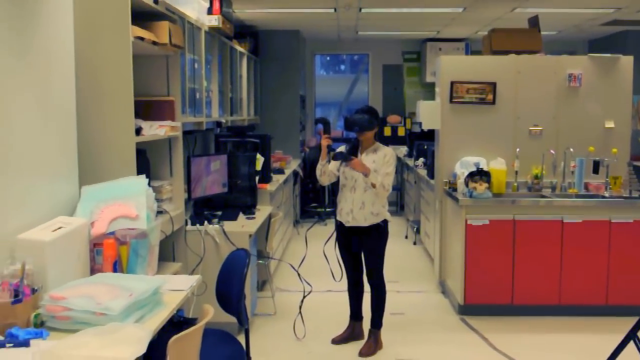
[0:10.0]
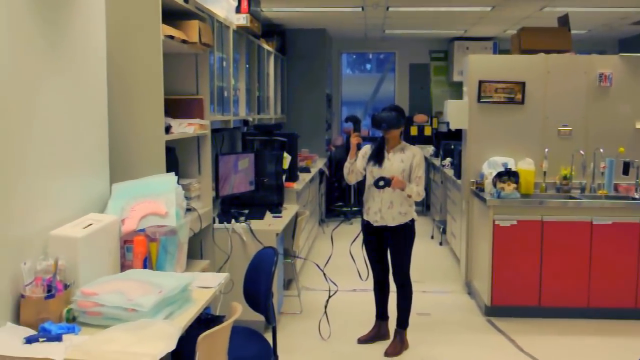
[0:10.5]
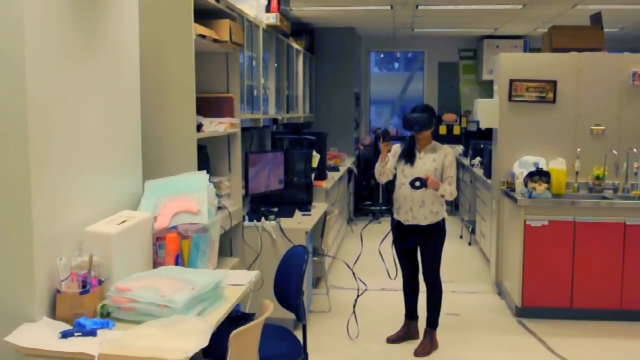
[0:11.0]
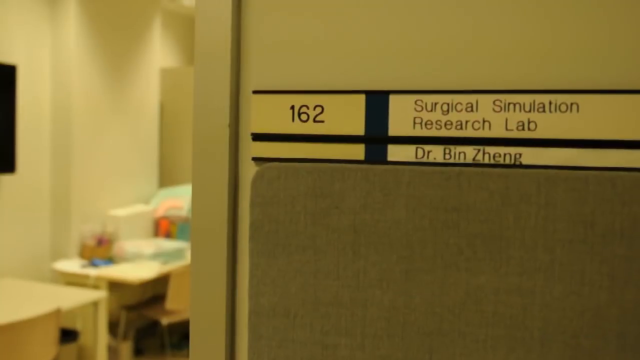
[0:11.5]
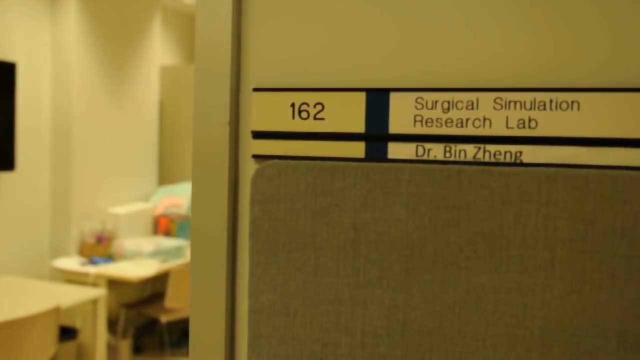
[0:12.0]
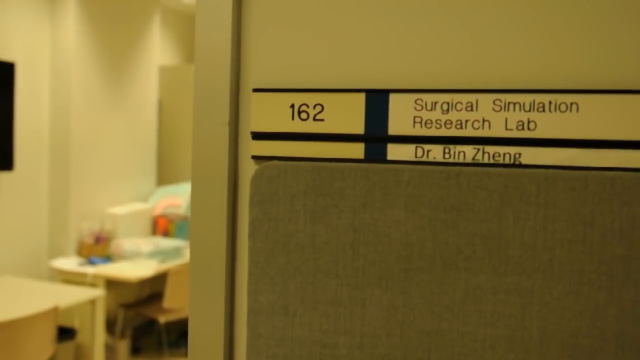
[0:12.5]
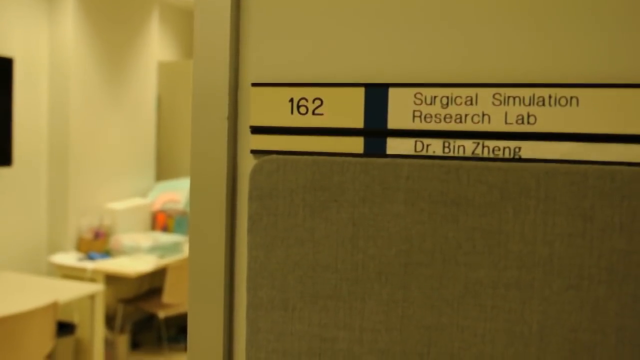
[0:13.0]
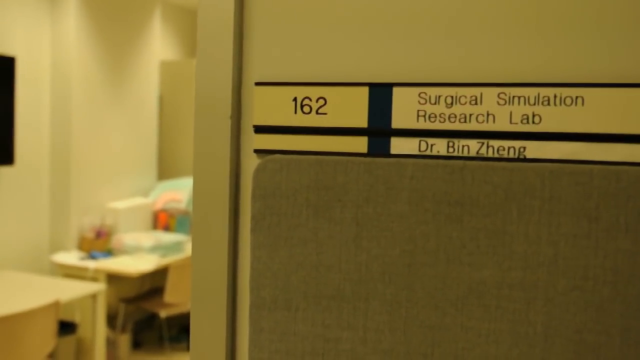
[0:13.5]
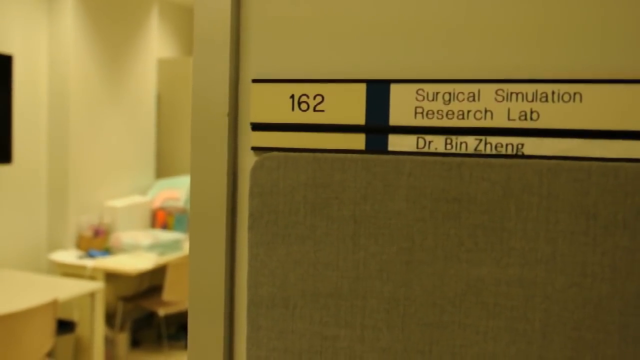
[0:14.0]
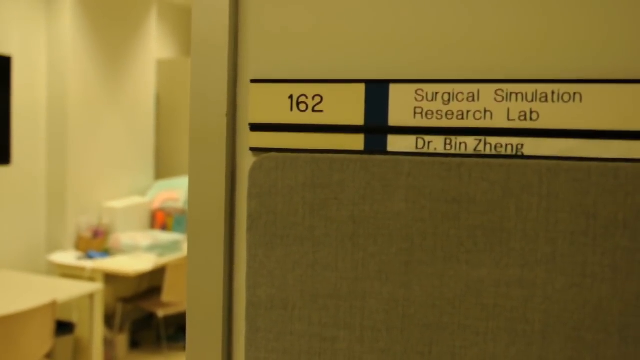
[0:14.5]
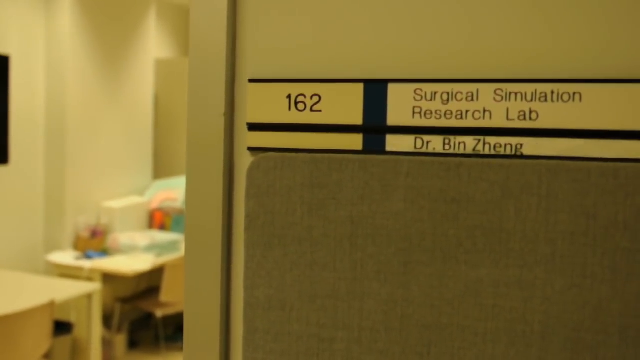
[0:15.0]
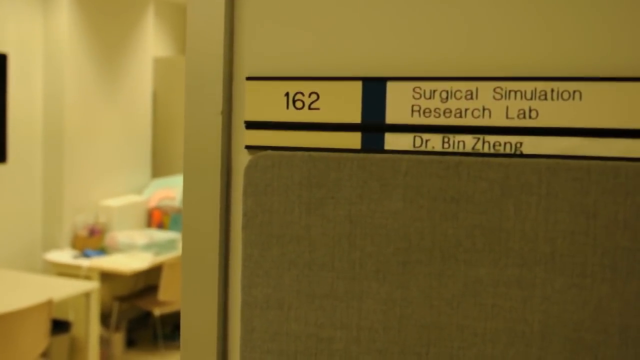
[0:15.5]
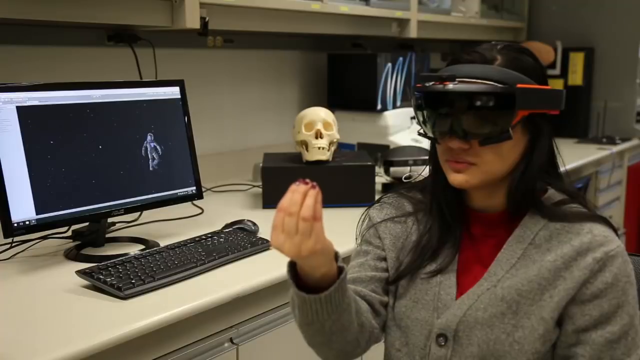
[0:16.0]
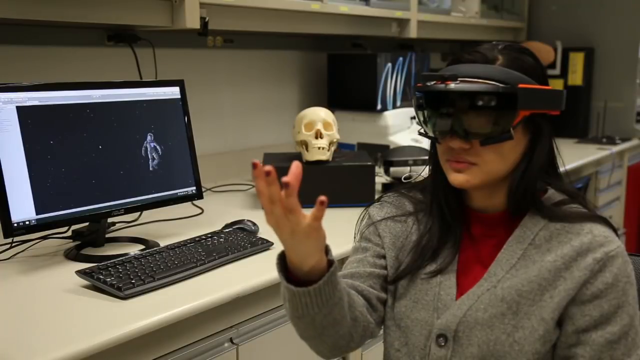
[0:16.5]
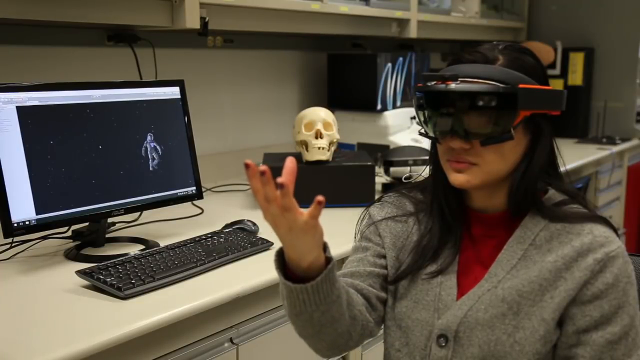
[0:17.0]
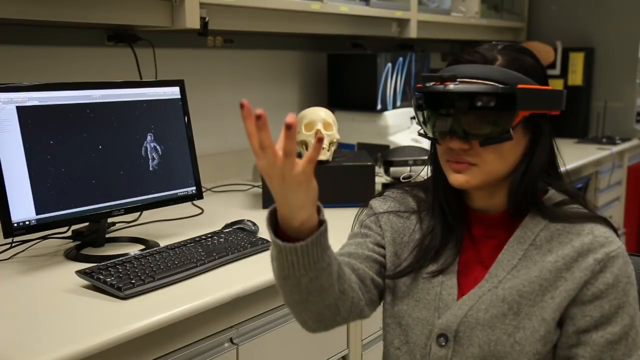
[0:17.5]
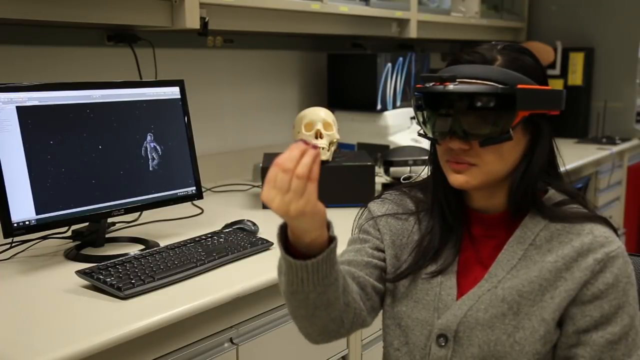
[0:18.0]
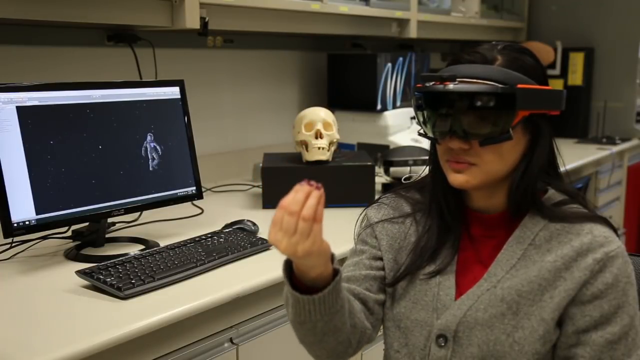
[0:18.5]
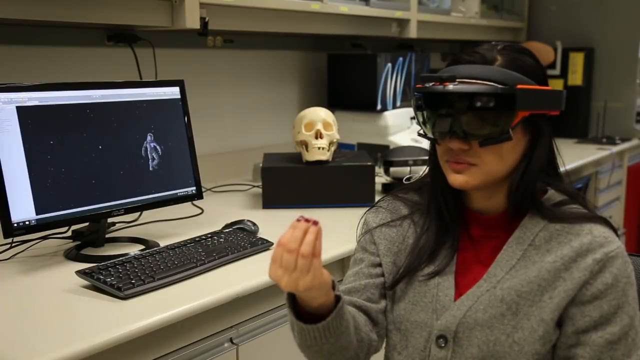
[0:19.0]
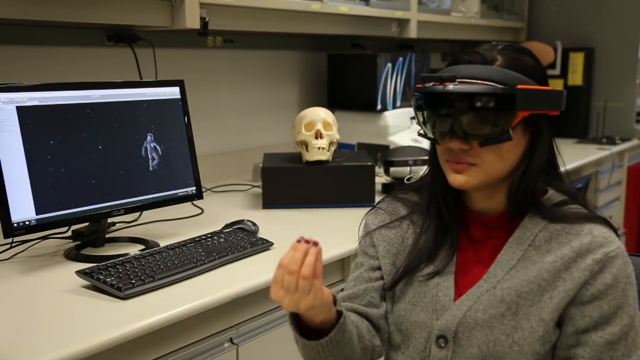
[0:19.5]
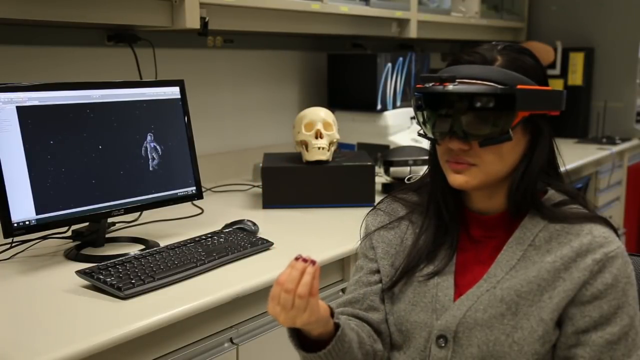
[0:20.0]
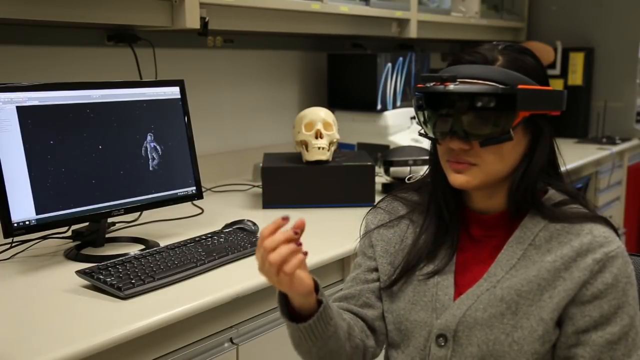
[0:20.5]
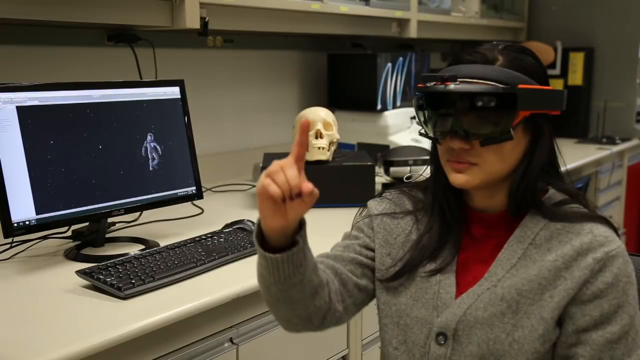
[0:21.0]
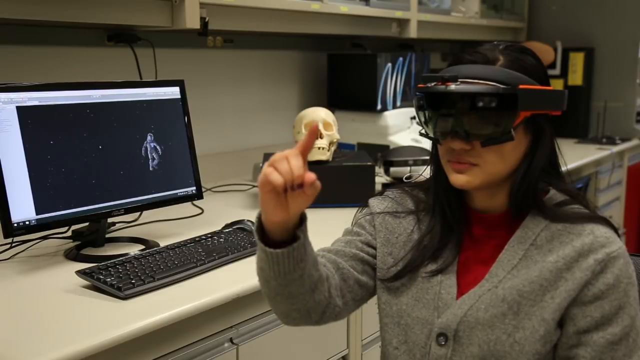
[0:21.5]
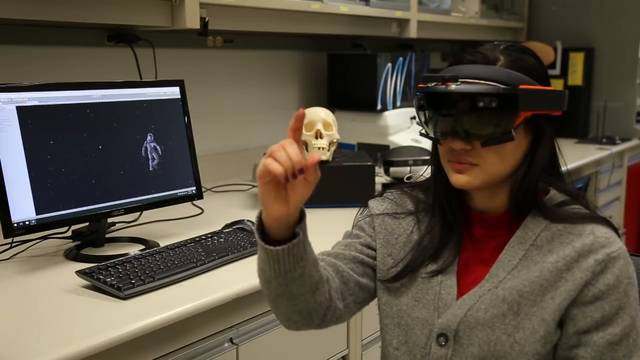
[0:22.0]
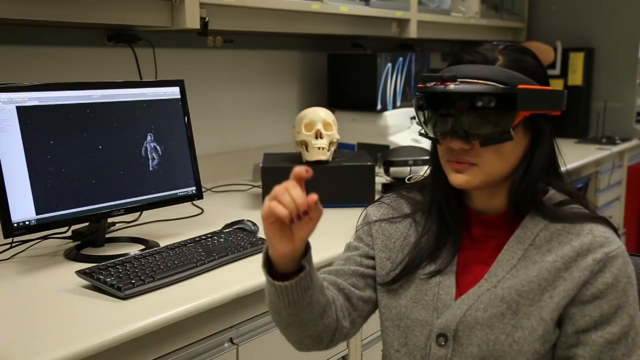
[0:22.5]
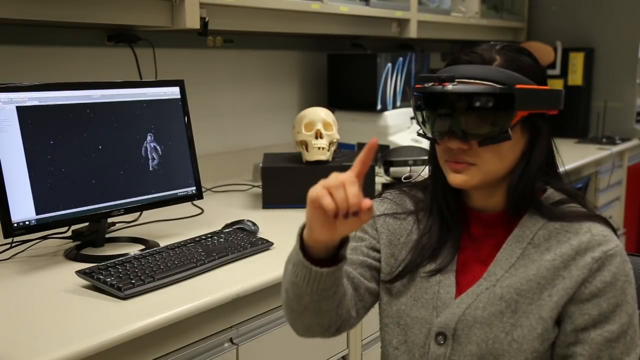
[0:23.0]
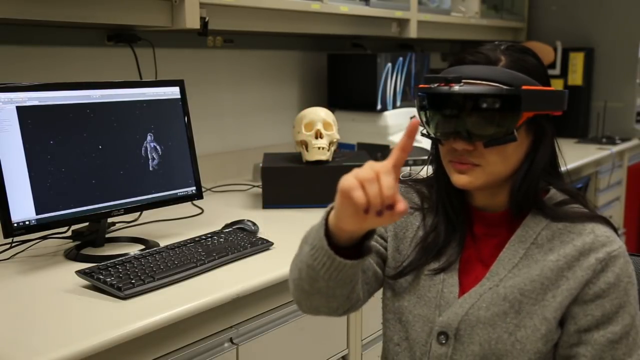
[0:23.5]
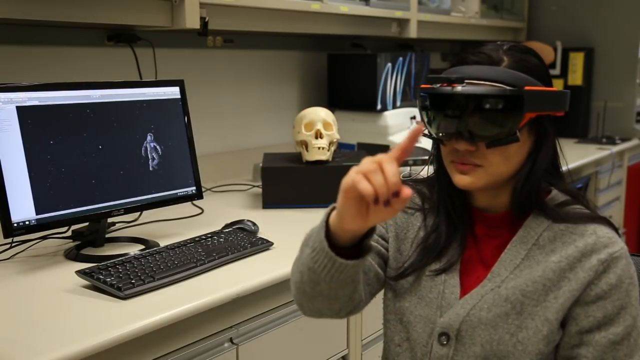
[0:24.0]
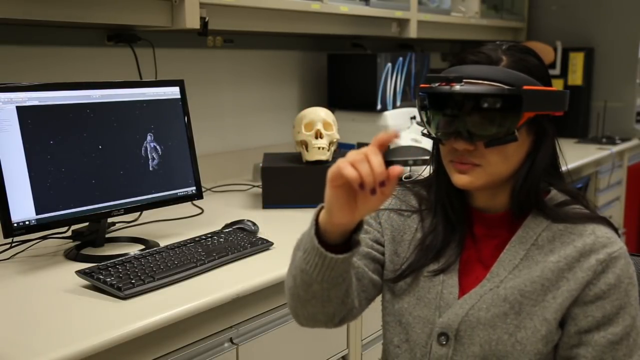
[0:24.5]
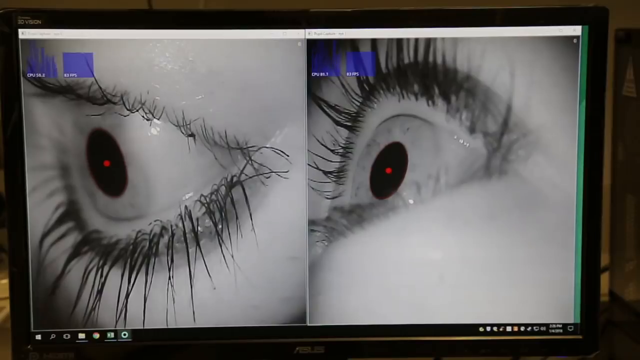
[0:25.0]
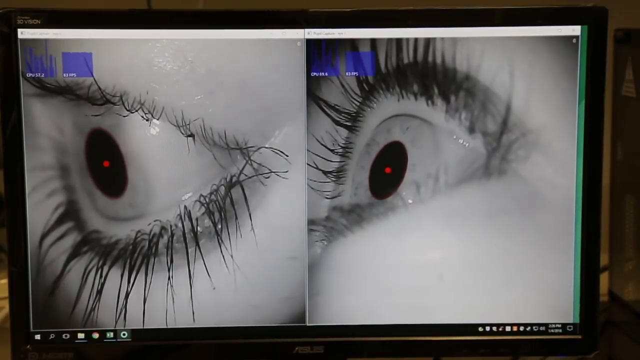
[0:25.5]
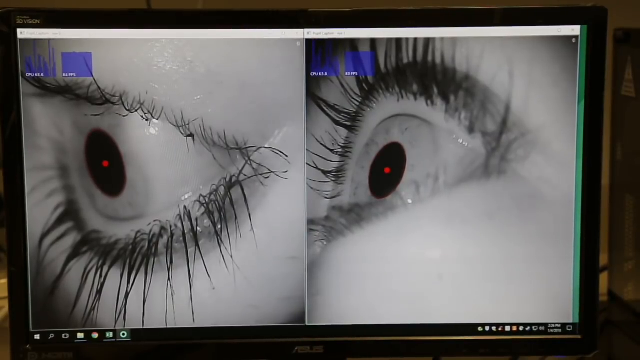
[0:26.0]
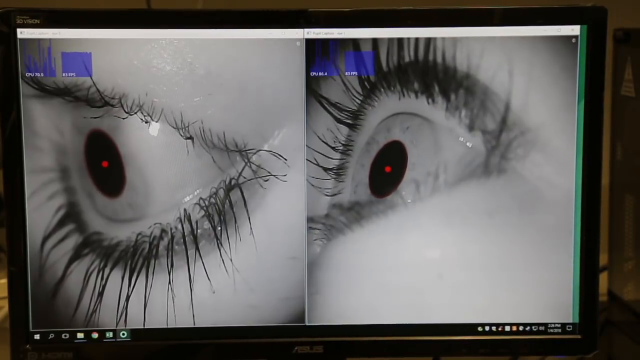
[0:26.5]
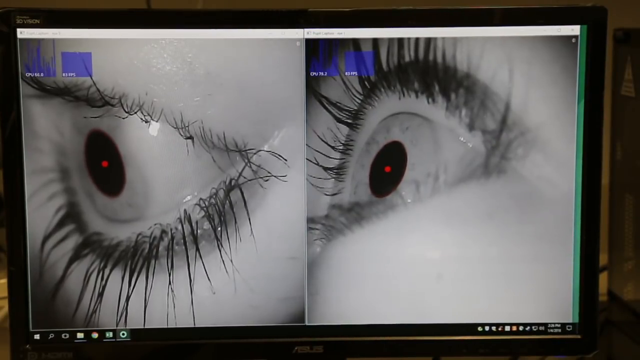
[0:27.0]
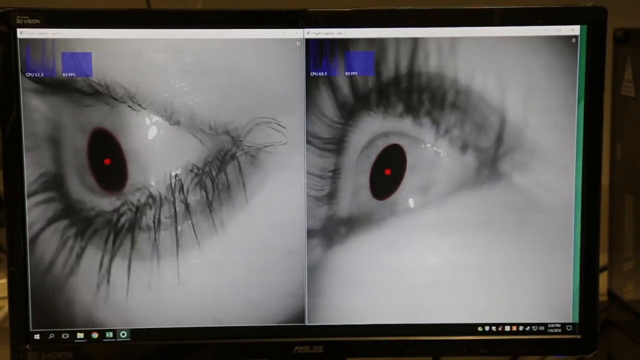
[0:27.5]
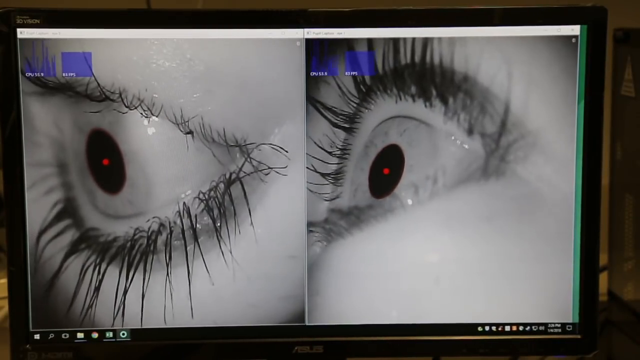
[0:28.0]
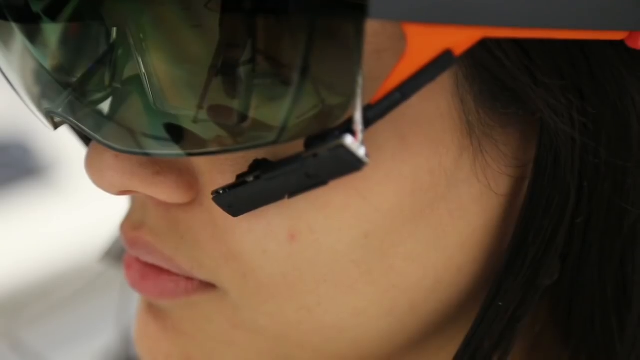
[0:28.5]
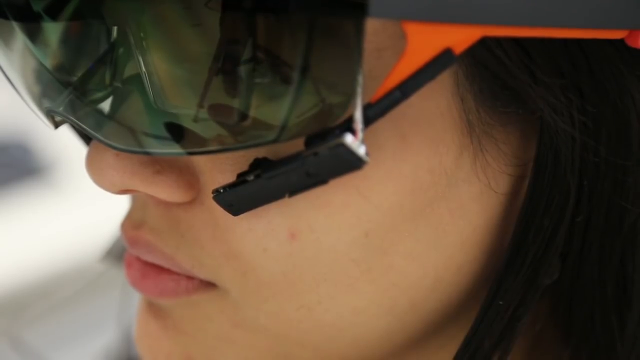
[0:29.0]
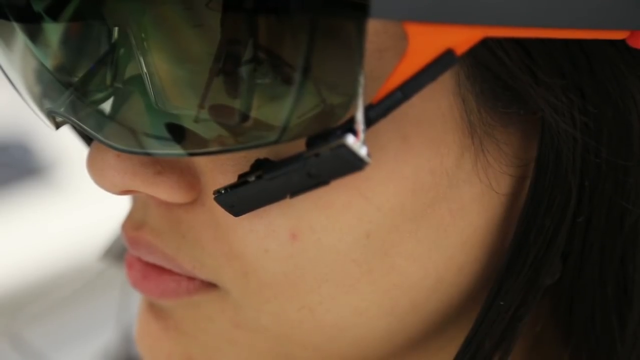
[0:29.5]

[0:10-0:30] A woman who appears to be standing inside a laboratory holds a piece of medical equipment in her hands; she holds the camera up to her face and films the area of the room around her. The scene changes to a plaque on the wall stating the room number, the type of room and the doctor's name: room 162, a surgical simulation research lab, whose doctor is Dr. Bin Zheng. Next, a woman sits at a desk, not facing it but turned to the left, apparently wearing simulation glasses. She holds her right arm out in front of her, bent at the elbow with the forearm slightly raised, fingers outspread and palm facing up. She brings her fingertips together until they touch, glides her hand straight down in front of her with the fingers pinched together, twists to the left and raises her forefinger toward the ceiling while her other three fingers and thumb stay drawn in toward her palm. She then circles her hand in the air, points her forefinger to her left and pulls her hand back down in front of her body. She wears red nail polish, and she appears to be looking directly at her hand through the simulation glasses during all of these motions. A desk is to her right with a keyboard and a monitor on it. Behind her is a black rectangular box with a skull on top of it. The video then shows two close-up shots of an open eye, each with a small red beam of light shining on its middle area.